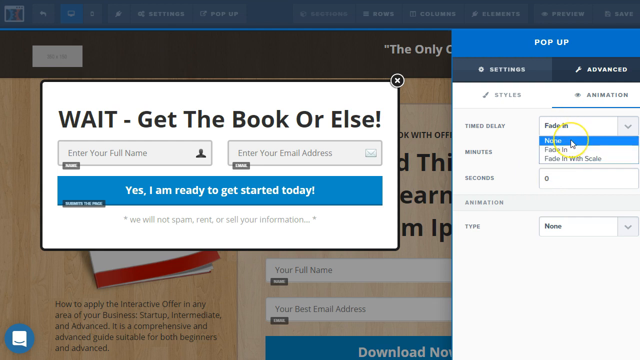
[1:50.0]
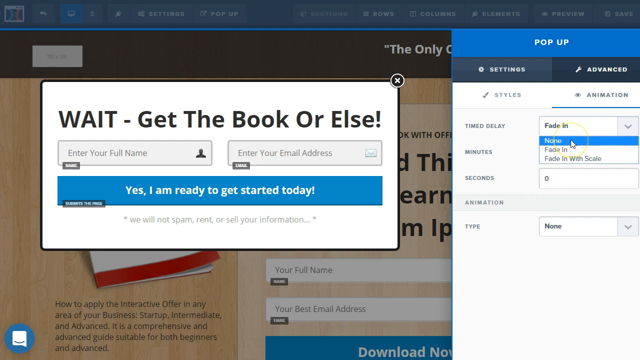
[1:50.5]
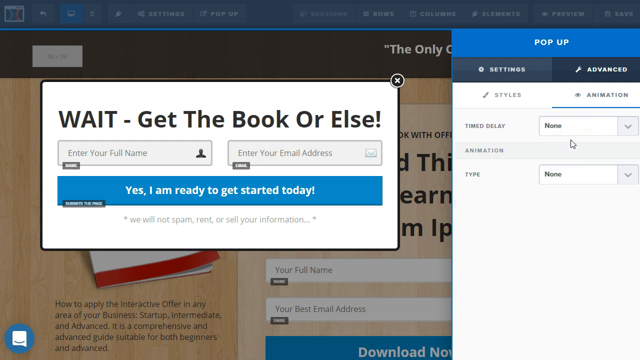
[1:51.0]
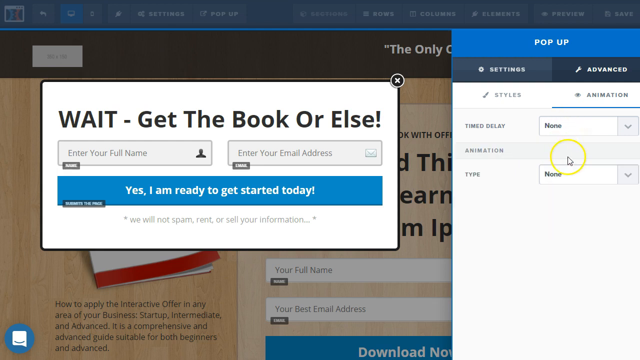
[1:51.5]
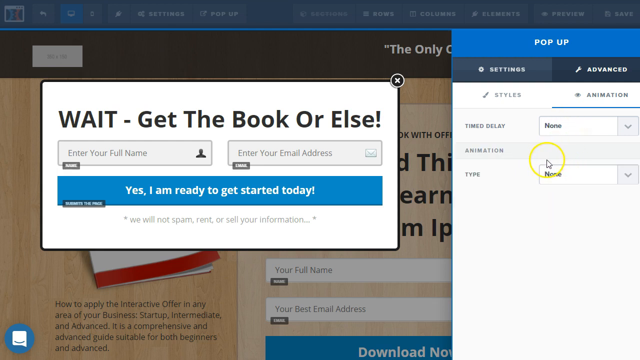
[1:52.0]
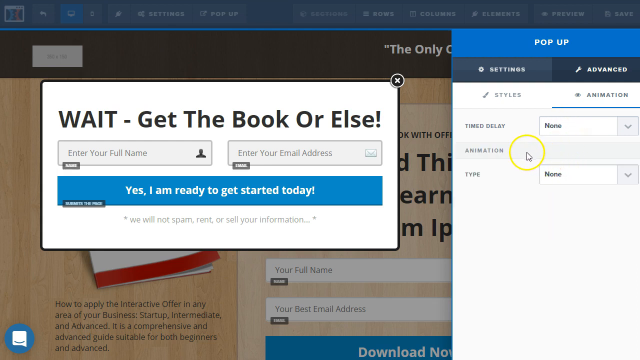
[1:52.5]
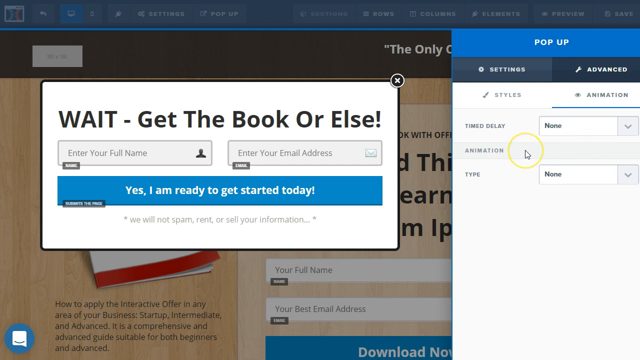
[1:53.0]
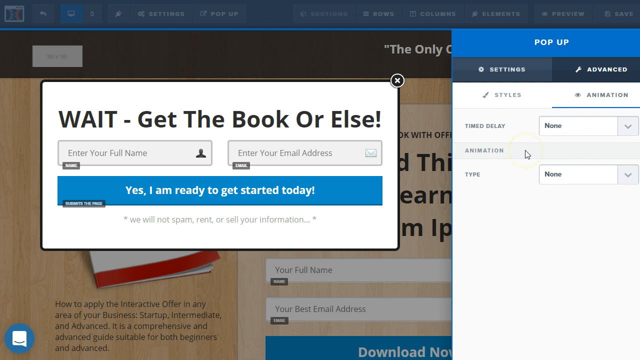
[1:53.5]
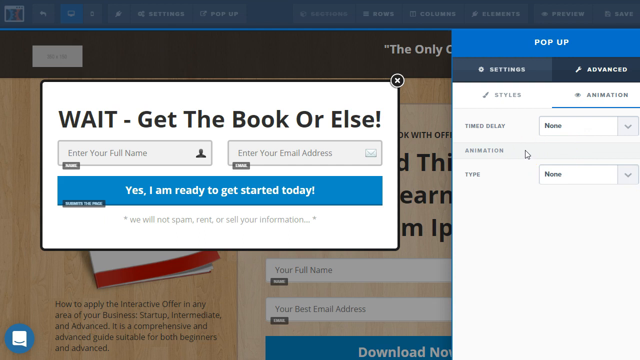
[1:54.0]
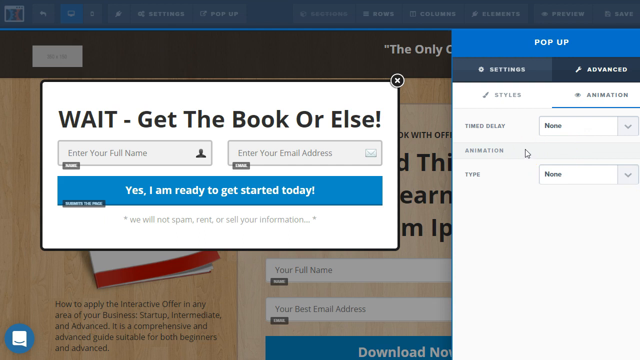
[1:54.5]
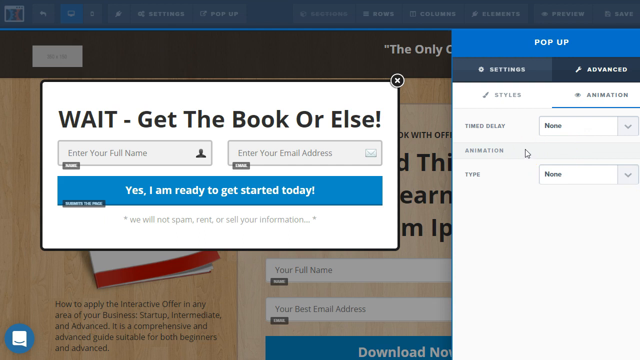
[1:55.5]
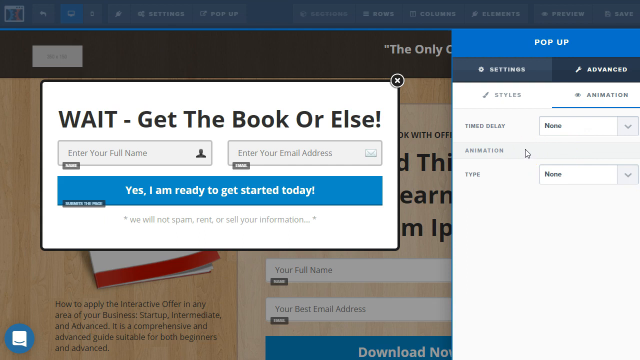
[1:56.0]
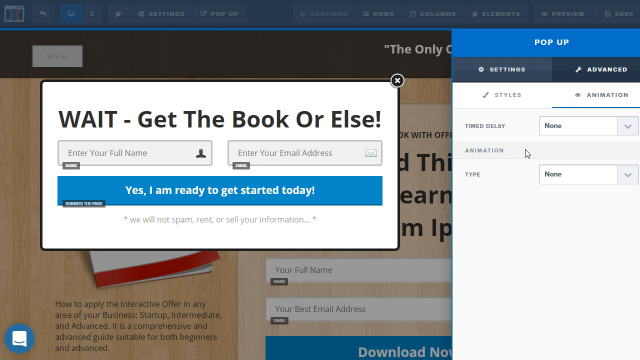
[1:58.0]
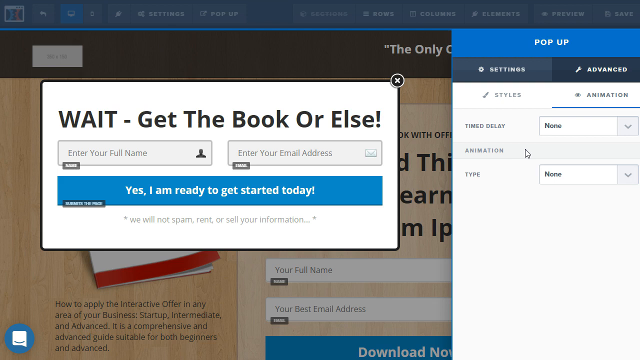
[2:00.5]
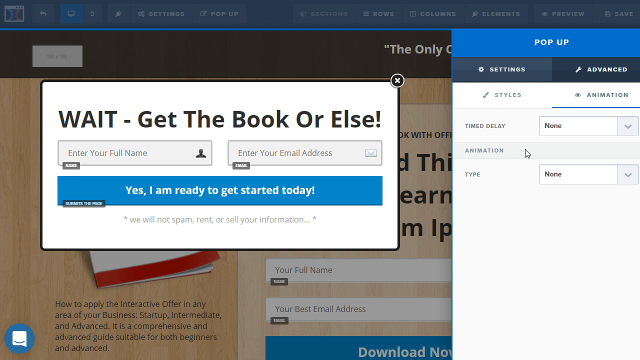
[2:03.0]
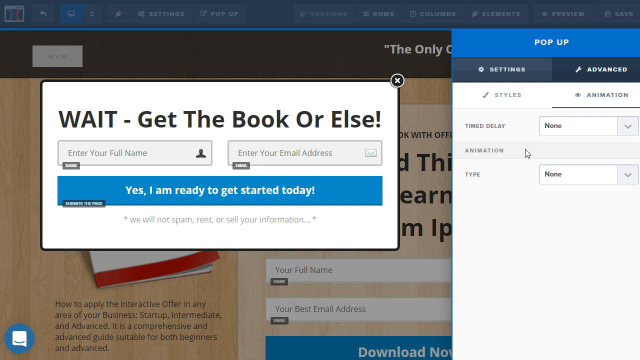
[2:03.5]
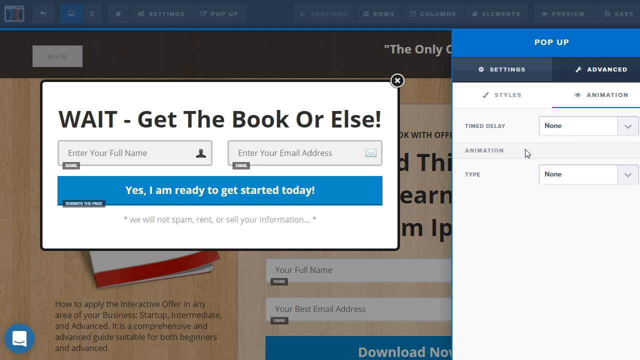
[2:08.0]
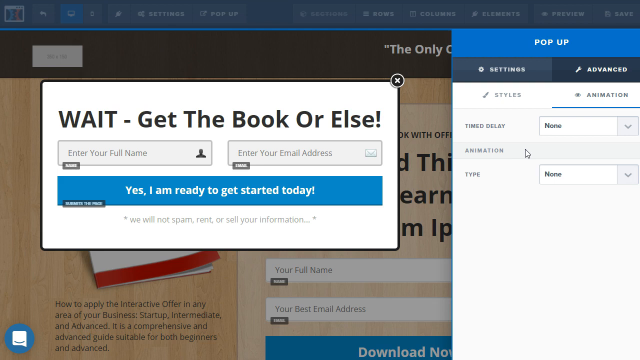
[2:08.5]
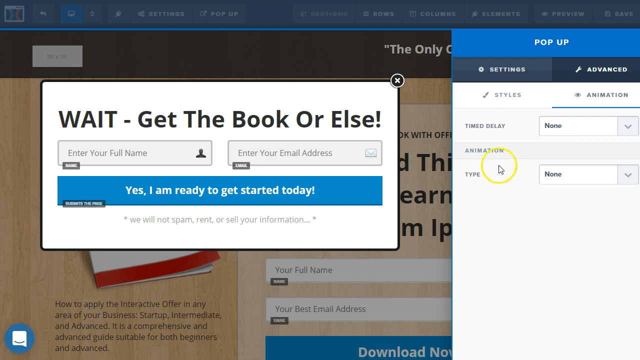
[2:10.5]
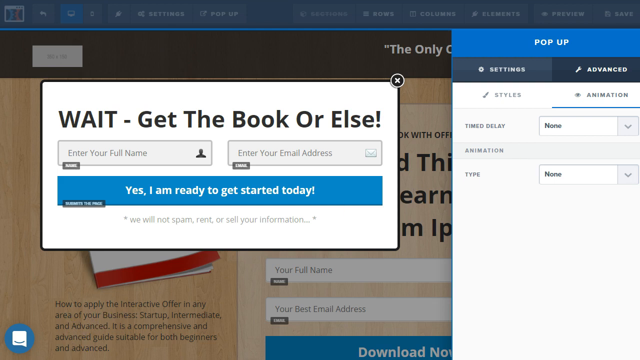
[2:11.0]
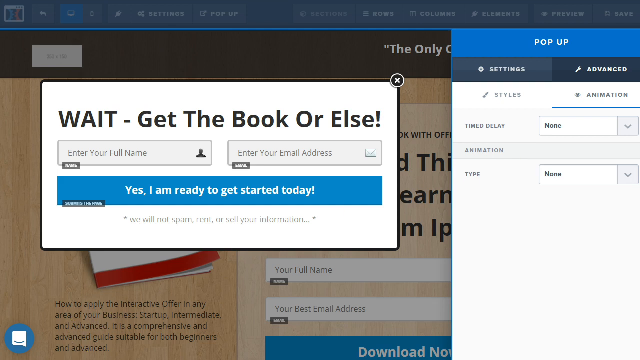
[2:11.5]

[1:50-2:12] A pop-up is on someone's page. After having clicked on fade in, the person moves the yellow circle up to where it says "none" and clicks it, and the time delay goes back to none; for animation, the type says "none". The arrow is just sitting in the animation area and does not really move until it heads down into the lower left-hand corner and disappears, leaving the settings as they were at the beginning. Another box on the page says "wait get the book or else", with areas to enter a full name and an email address and a button that says "yes. I am ready to get started today".